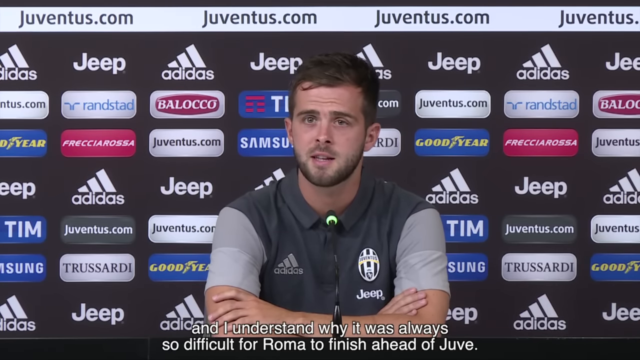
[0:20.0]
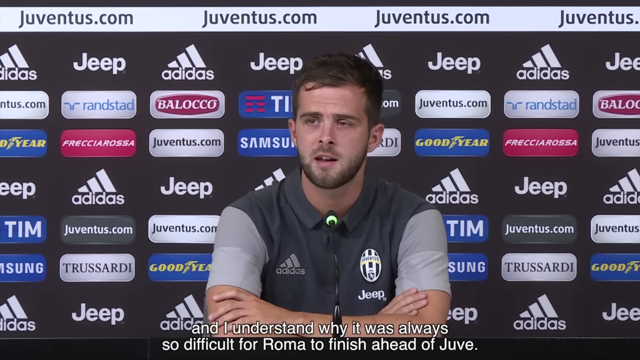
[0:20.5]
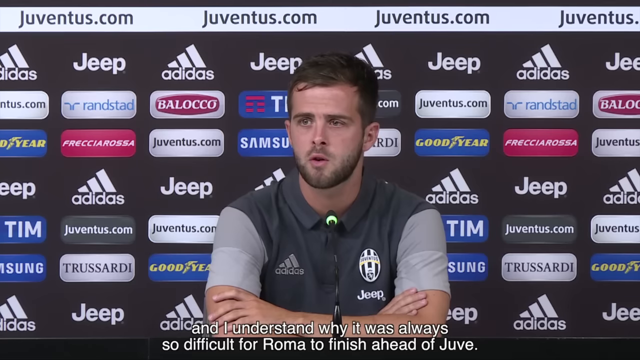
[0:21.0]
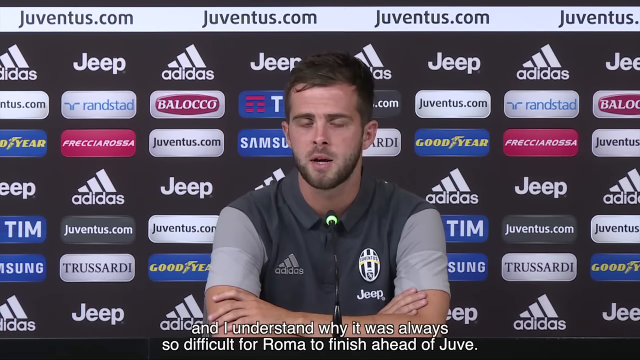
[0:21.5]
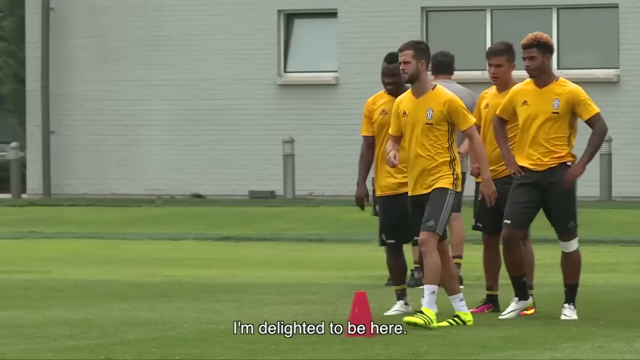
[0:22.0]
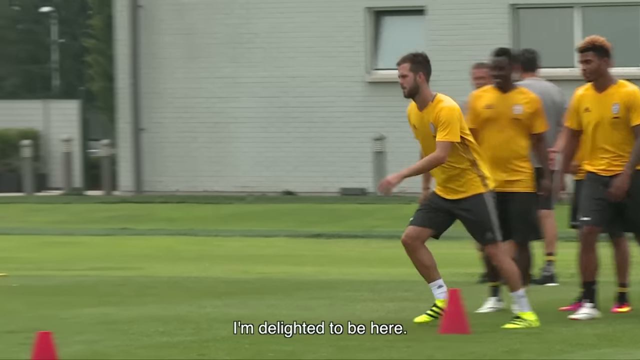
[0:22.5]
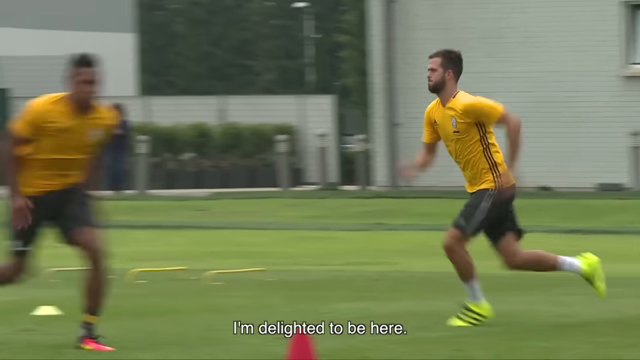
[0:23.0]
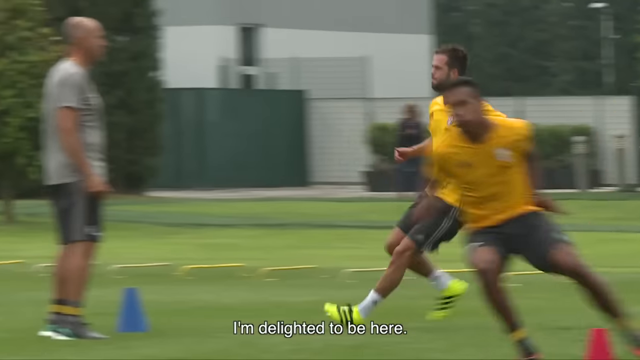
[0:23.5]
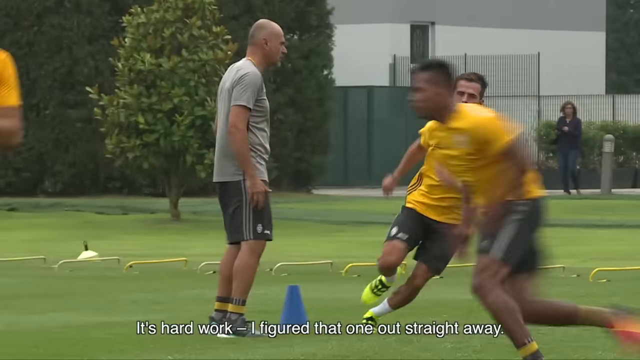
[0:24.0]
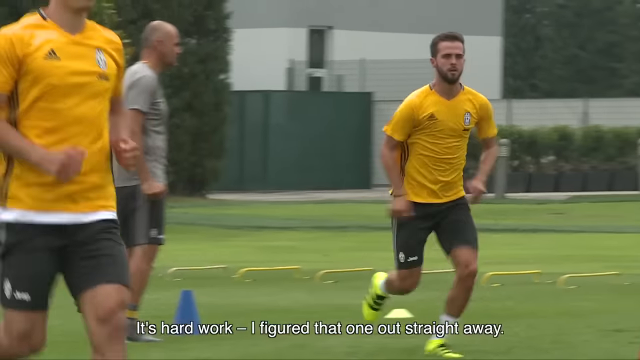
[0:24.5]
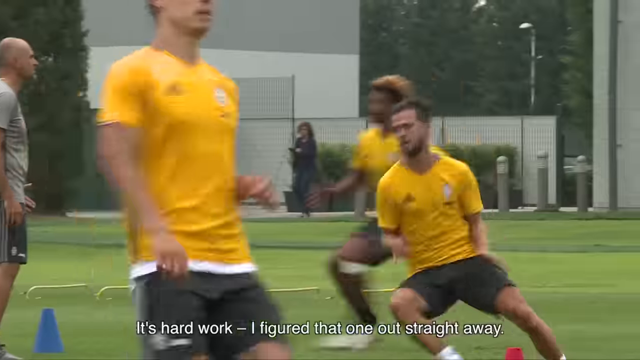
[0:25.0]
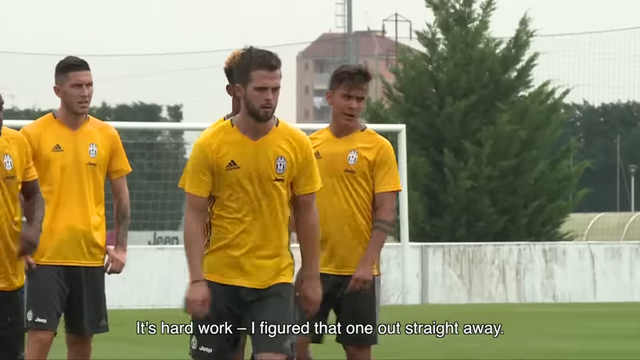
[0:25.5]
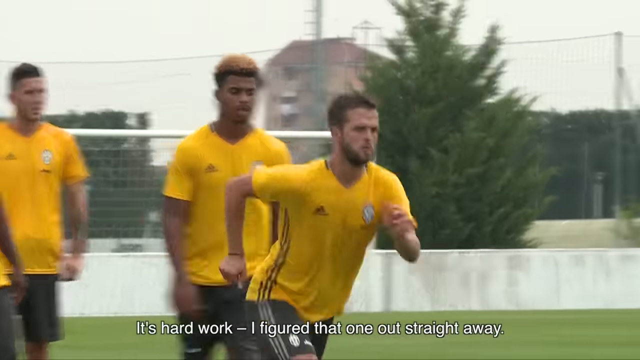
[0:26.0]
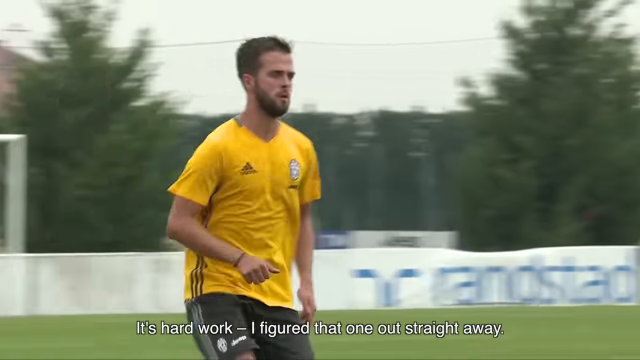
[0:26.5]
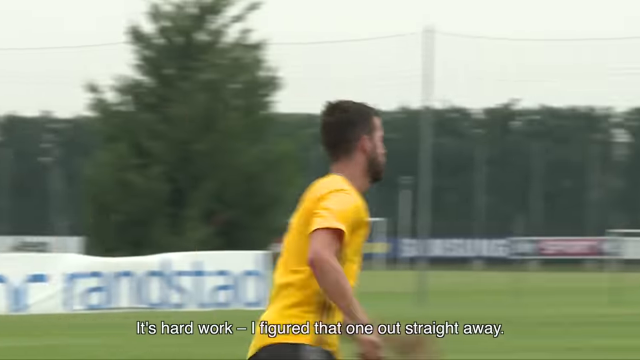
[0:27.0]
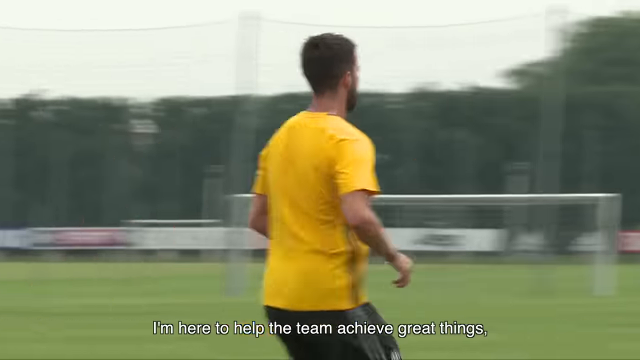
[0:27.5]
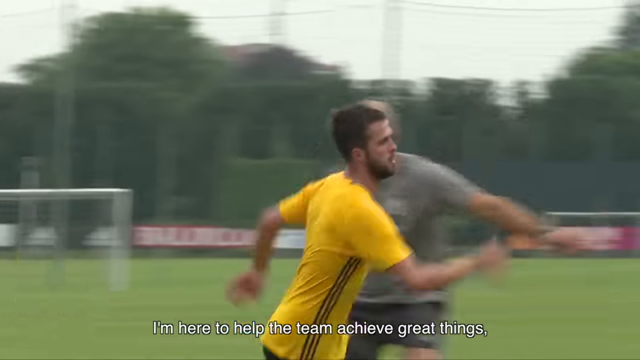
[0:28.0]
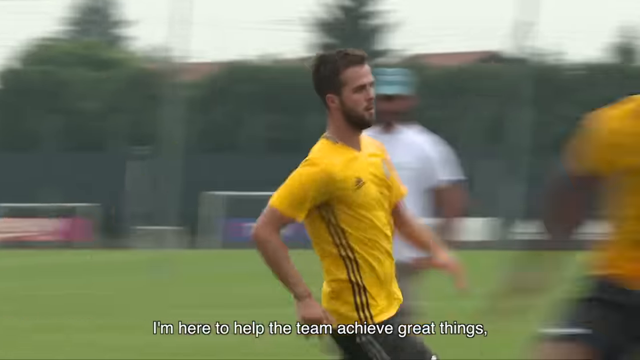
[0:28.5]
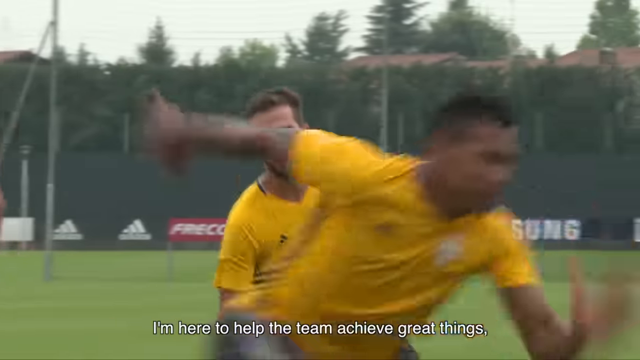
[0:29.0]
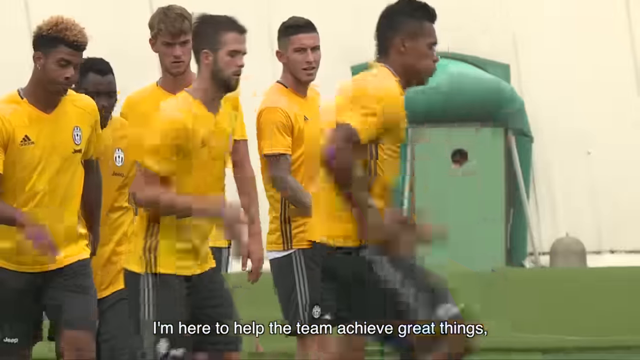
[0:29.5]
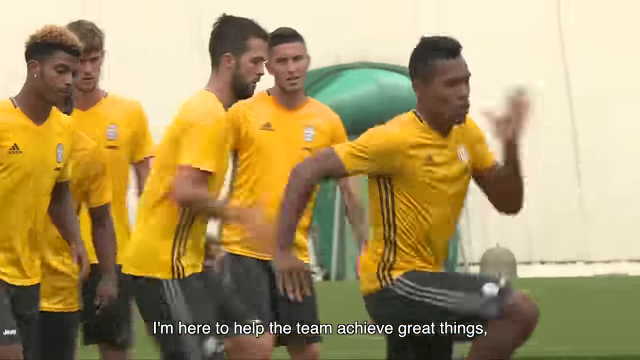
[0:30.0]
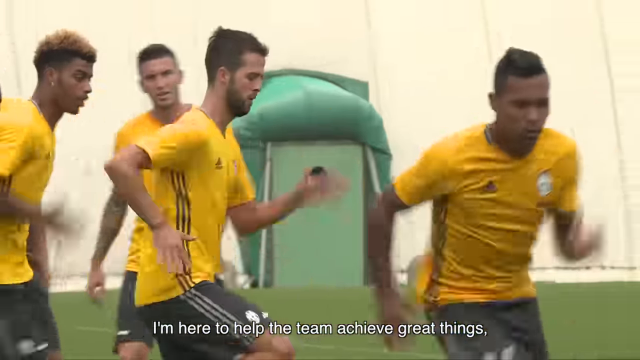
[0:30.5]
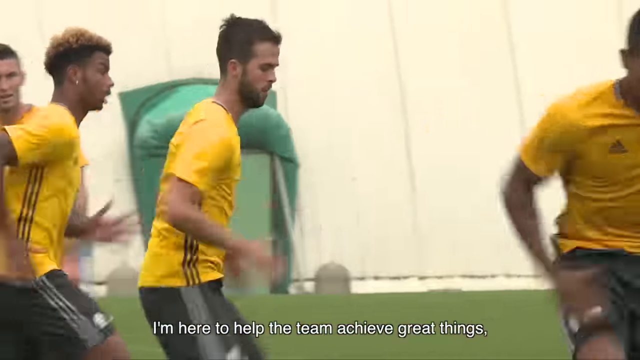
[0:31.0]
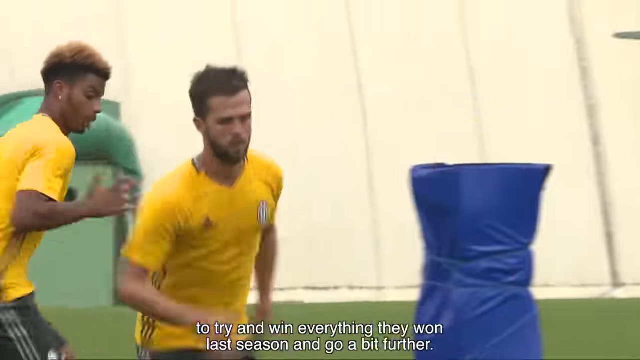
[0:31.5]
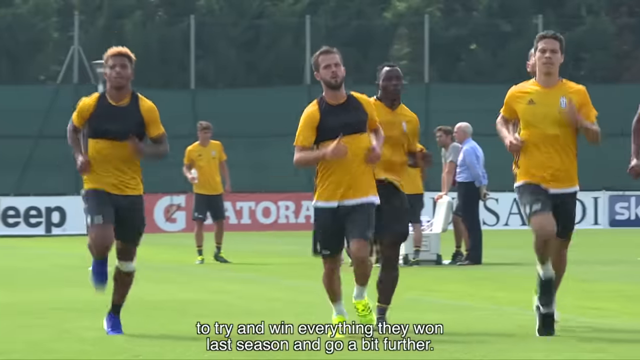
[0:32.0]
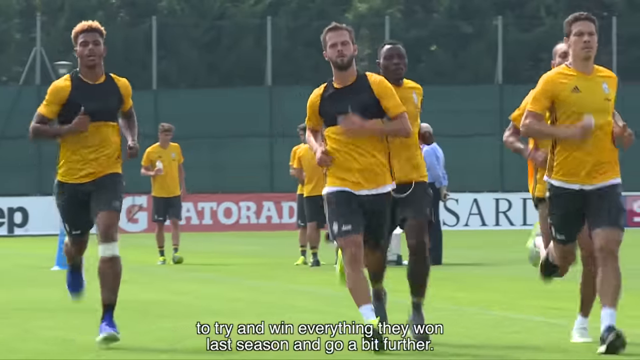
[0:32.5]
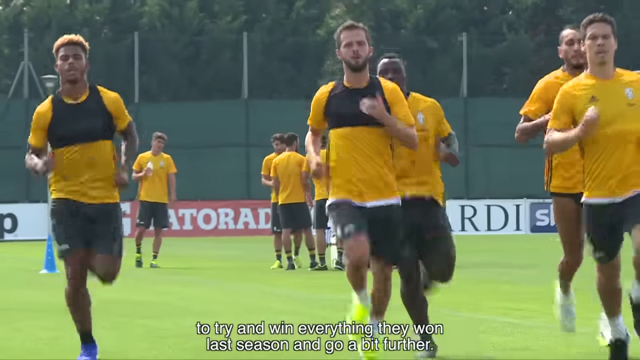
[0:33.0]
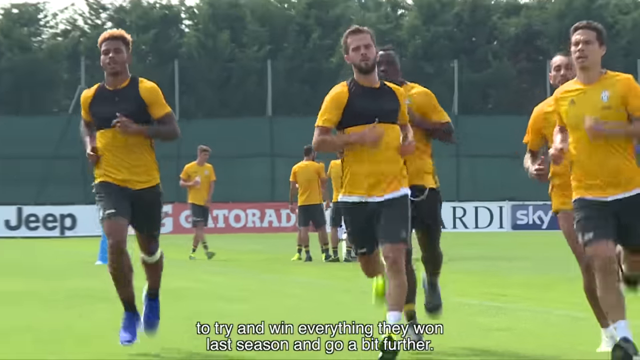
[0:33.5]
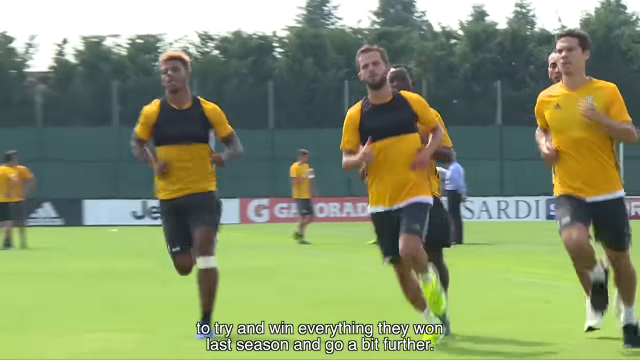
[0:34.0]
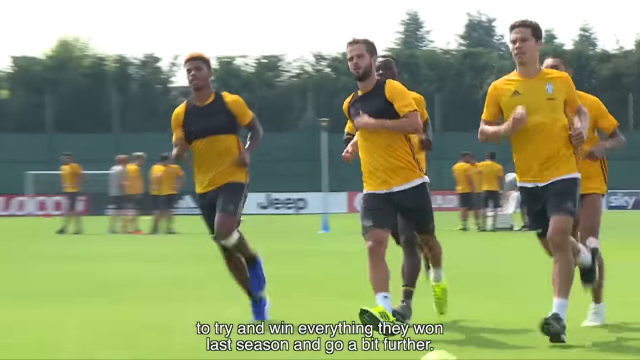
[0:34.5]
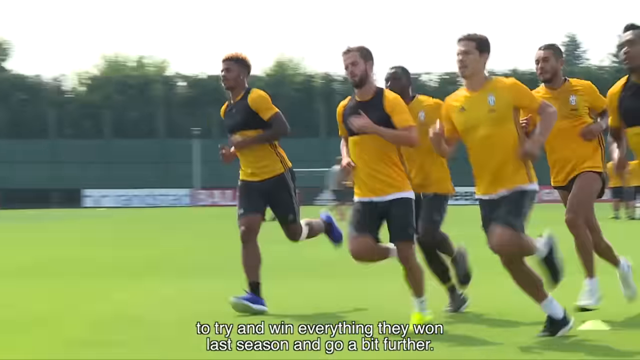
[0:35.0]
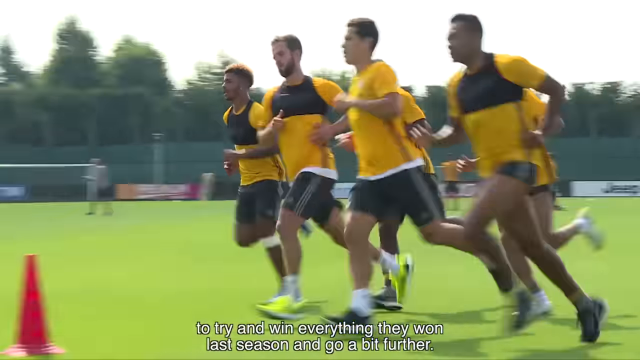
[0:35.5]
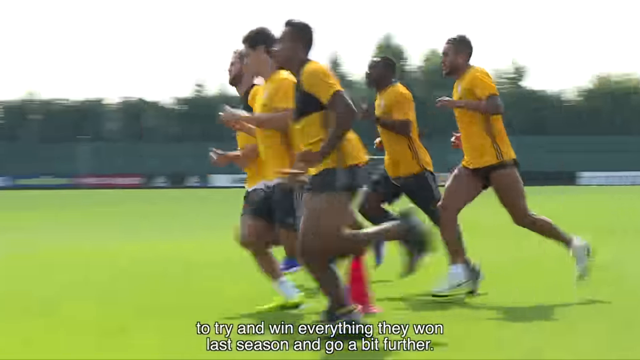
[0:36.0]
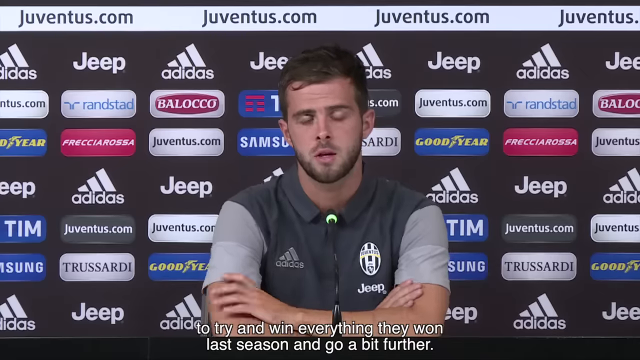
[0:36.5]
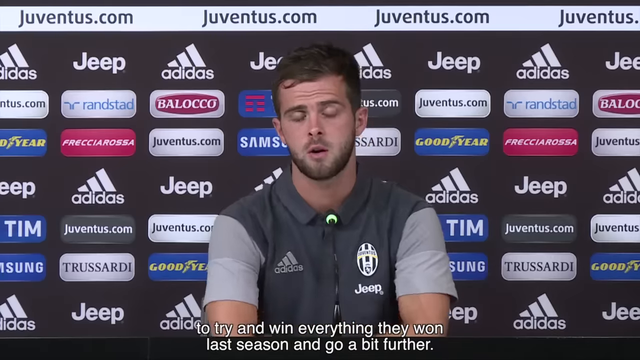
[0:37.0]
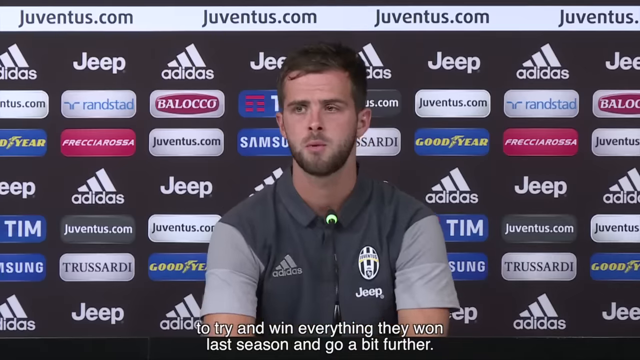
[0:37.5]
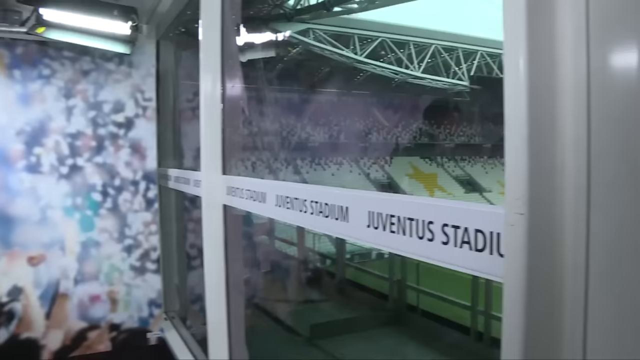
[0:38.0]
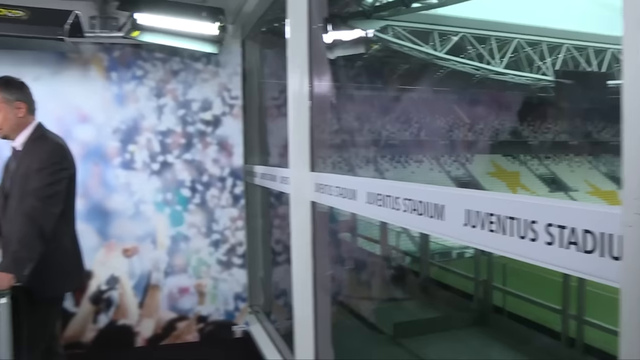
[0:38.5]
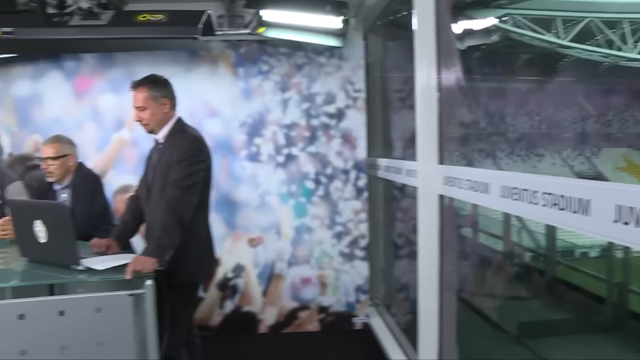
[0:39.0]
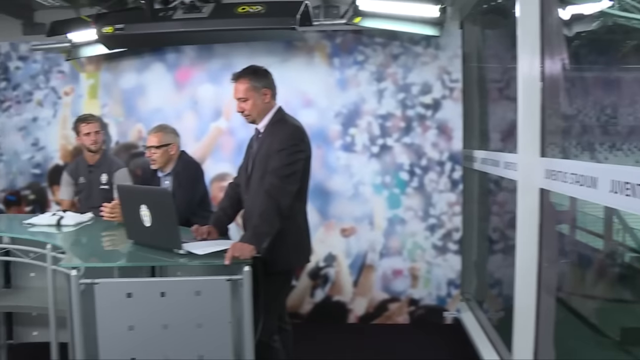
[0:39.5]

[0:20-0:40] A man sits at a podium wearing a gray shirt with black layered over the top of it, with an Adidas logo and a Jeep logo on the shirt. He has black hair and a black beard and is speaking to the reporters. Behind him is a black wall listing many different advertisements, including Jeep, Adidas, Goodyear and many others. After he speaks for several seconds, the video shows clips of soccer practice outside on green grass during the daytime. Many male soccer players in black shorts and yellow jerseys run around doing drills around blue cones. The camera seems to focus on the same man who was speaking at the podium. Finally, the video returns to the press conference.